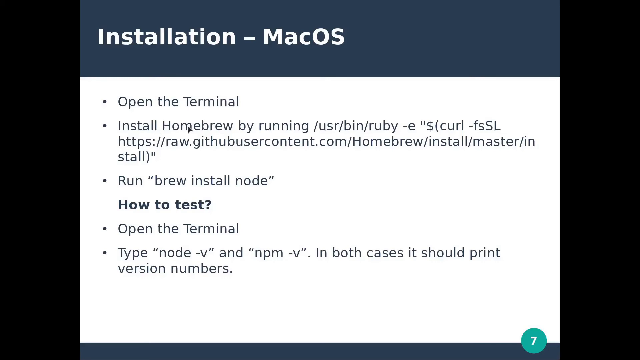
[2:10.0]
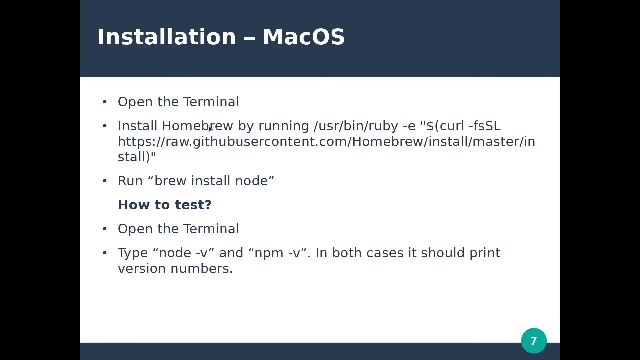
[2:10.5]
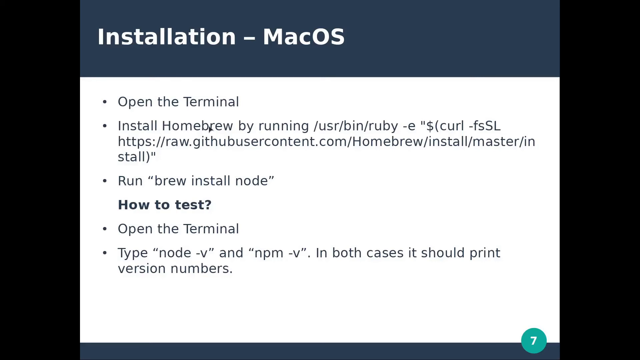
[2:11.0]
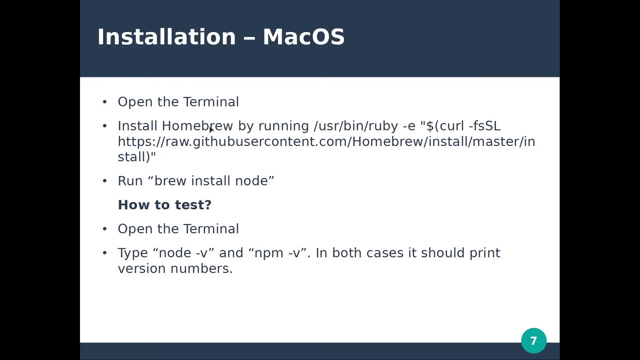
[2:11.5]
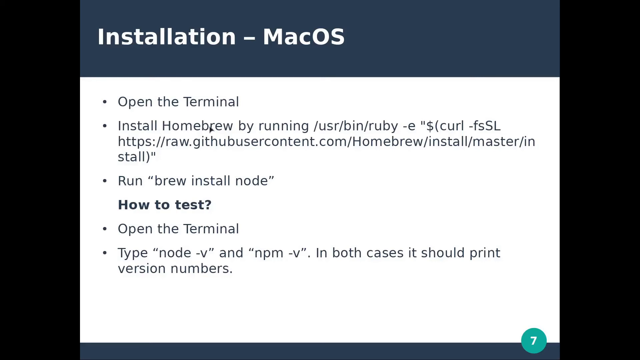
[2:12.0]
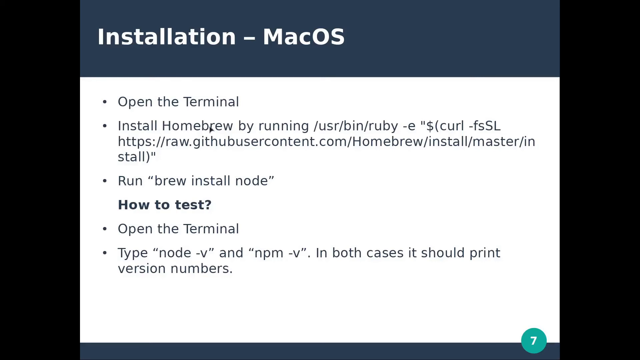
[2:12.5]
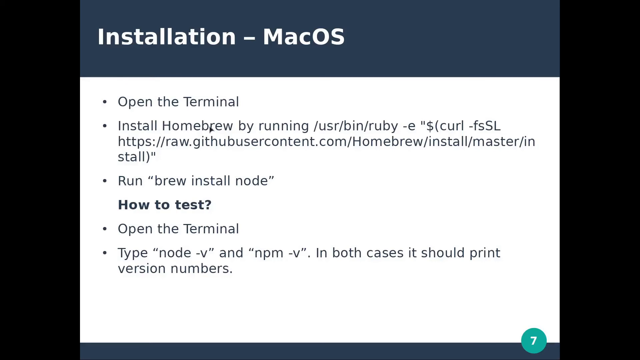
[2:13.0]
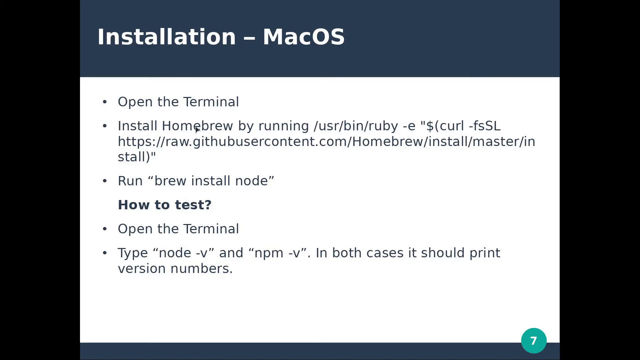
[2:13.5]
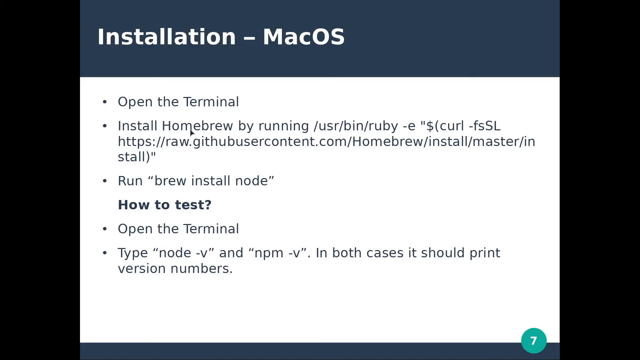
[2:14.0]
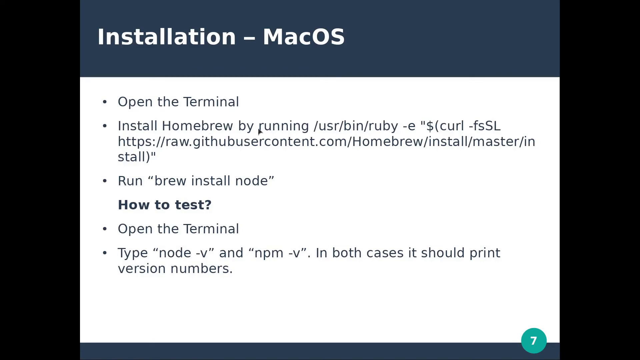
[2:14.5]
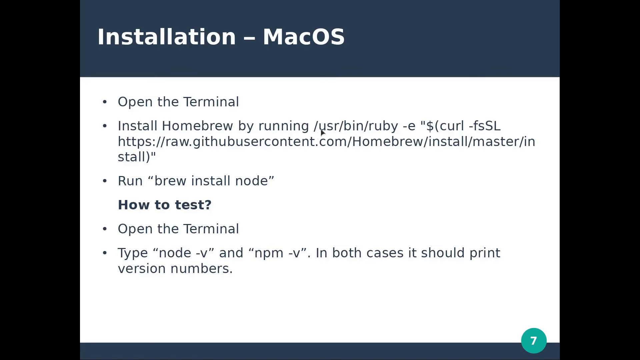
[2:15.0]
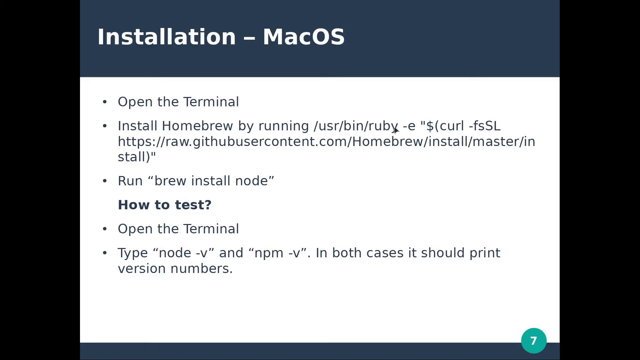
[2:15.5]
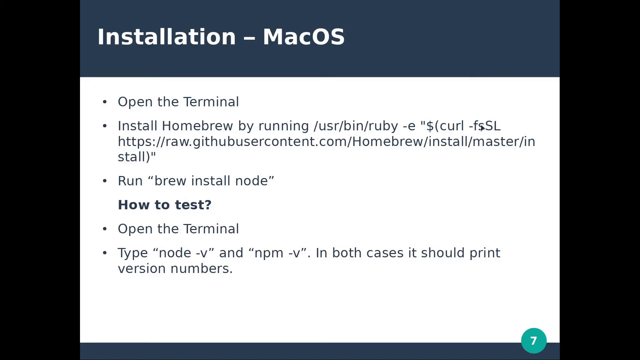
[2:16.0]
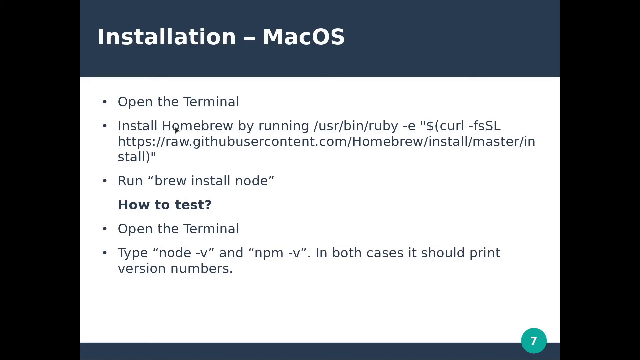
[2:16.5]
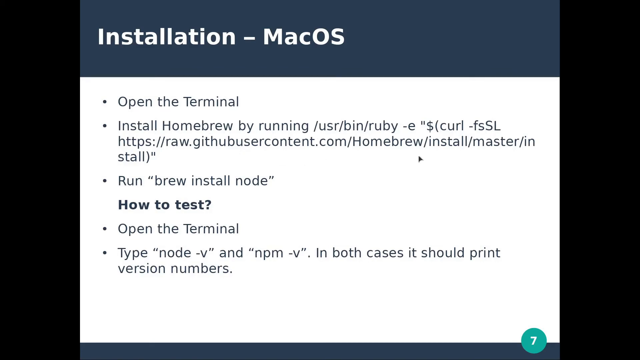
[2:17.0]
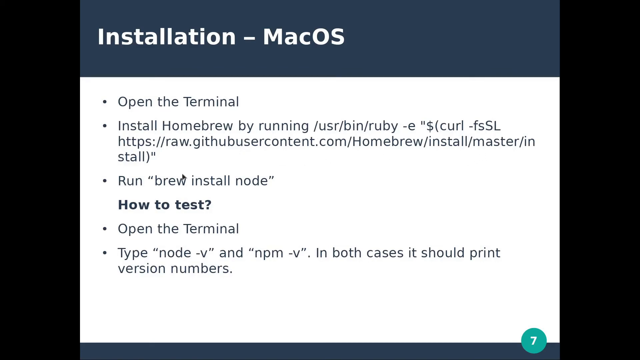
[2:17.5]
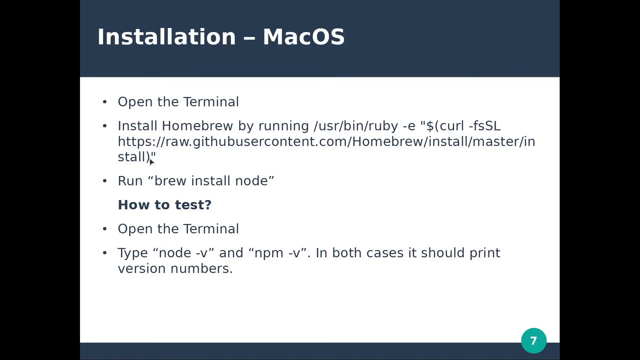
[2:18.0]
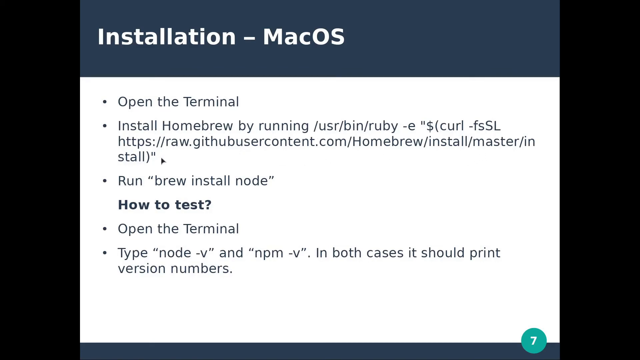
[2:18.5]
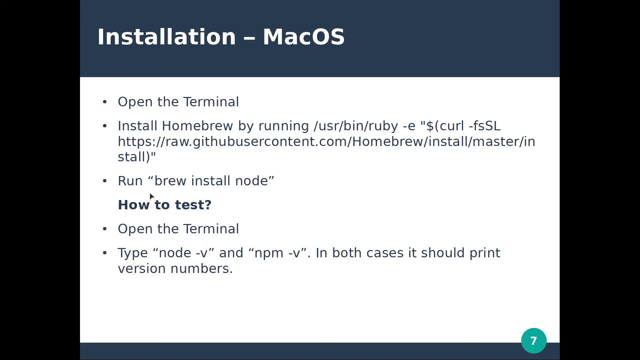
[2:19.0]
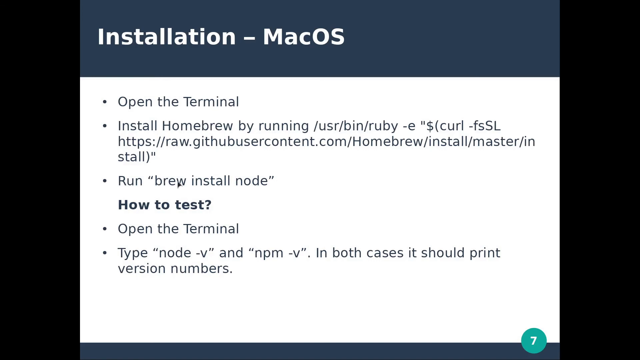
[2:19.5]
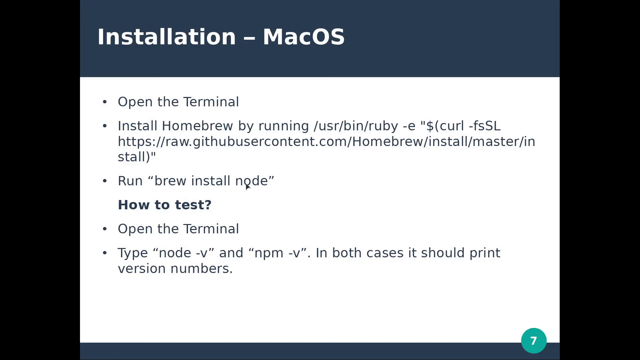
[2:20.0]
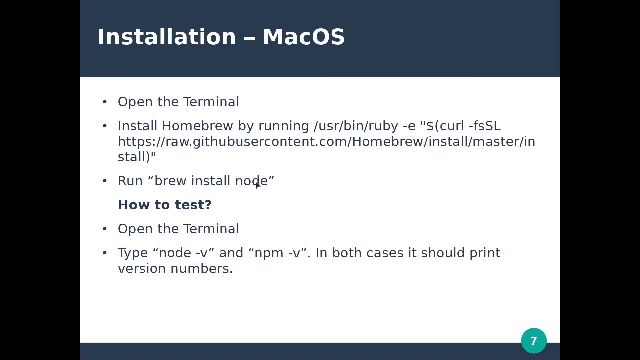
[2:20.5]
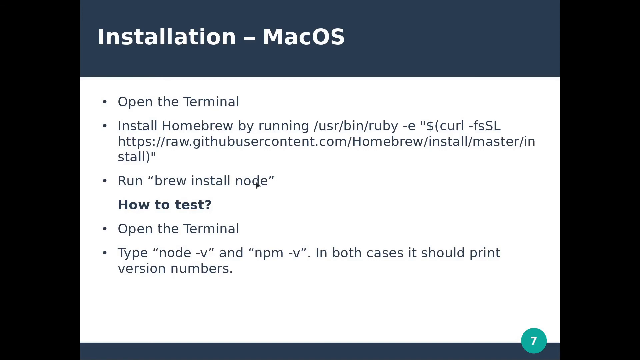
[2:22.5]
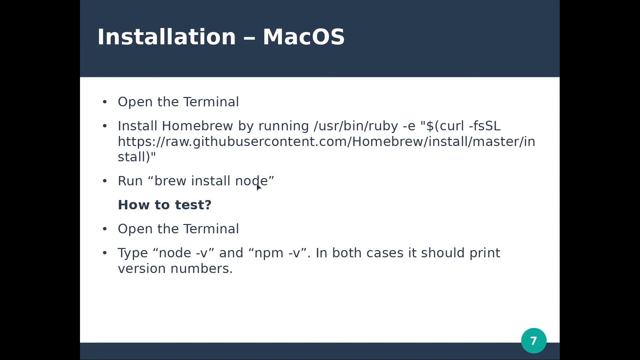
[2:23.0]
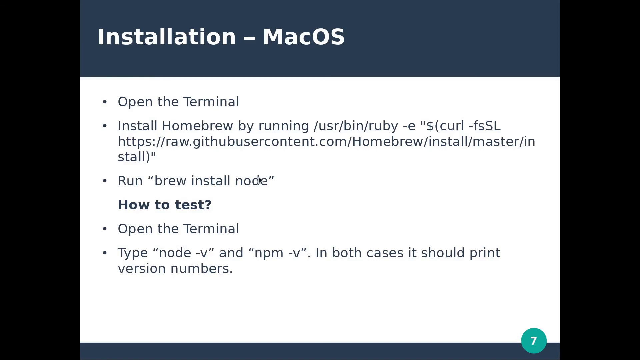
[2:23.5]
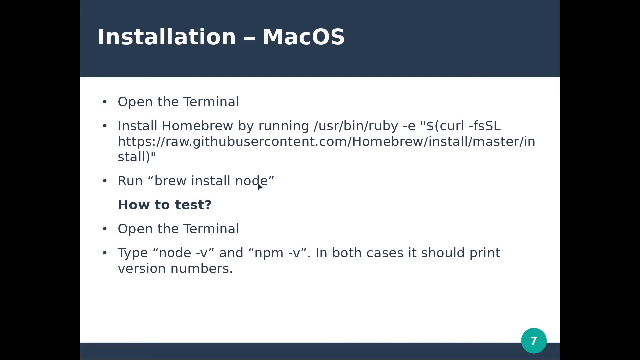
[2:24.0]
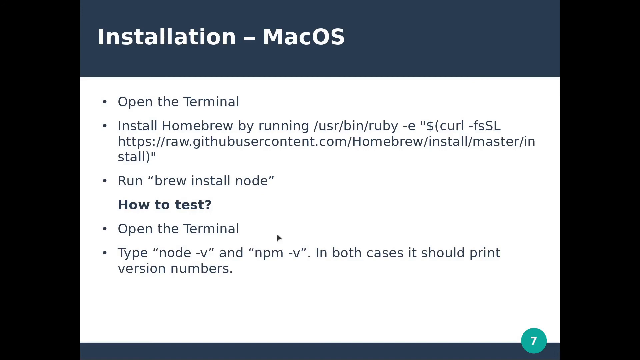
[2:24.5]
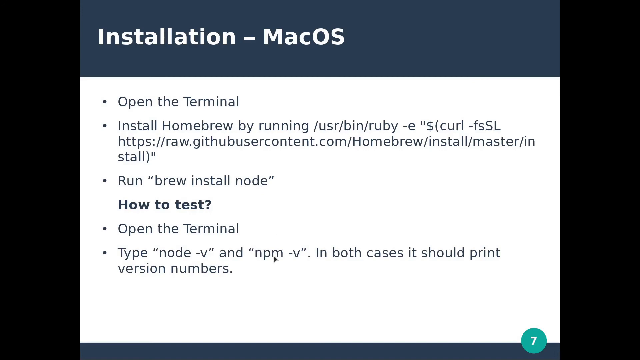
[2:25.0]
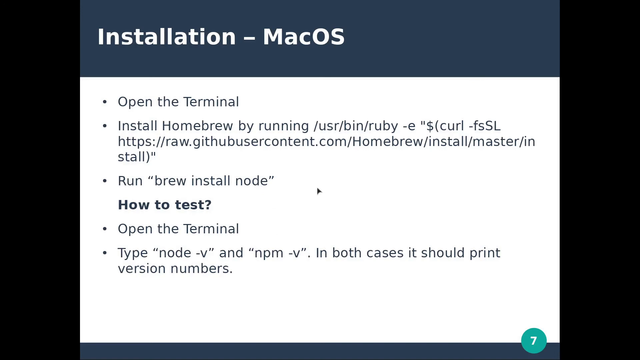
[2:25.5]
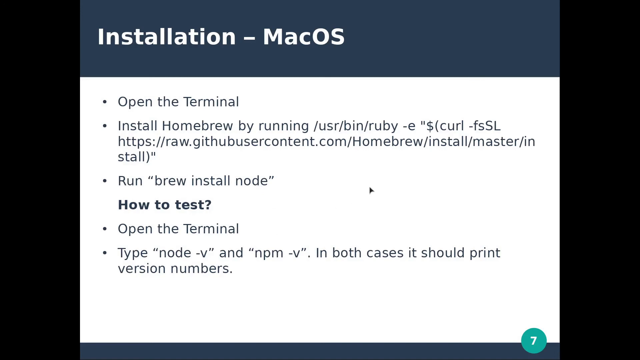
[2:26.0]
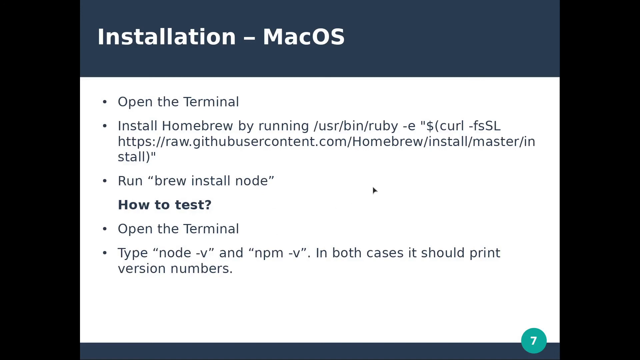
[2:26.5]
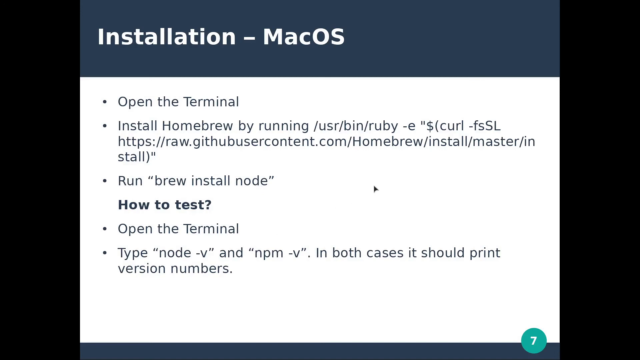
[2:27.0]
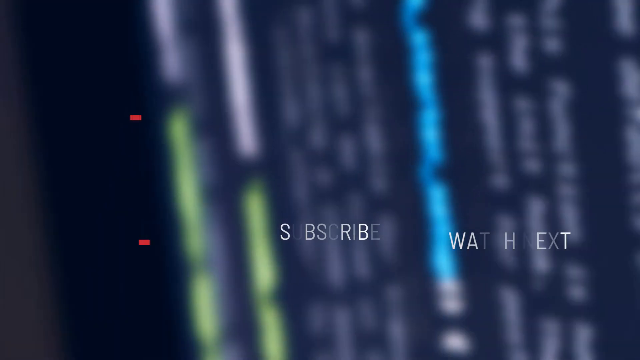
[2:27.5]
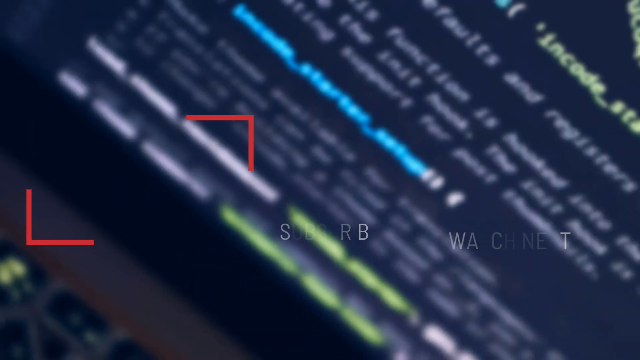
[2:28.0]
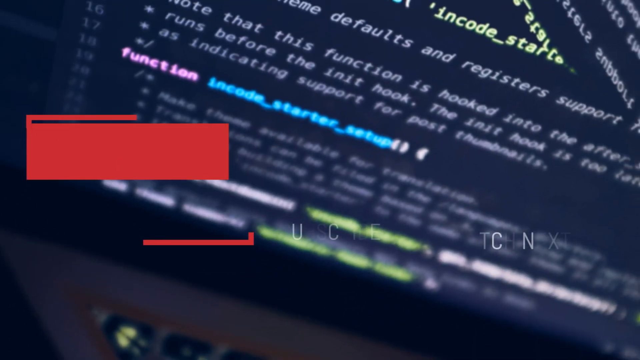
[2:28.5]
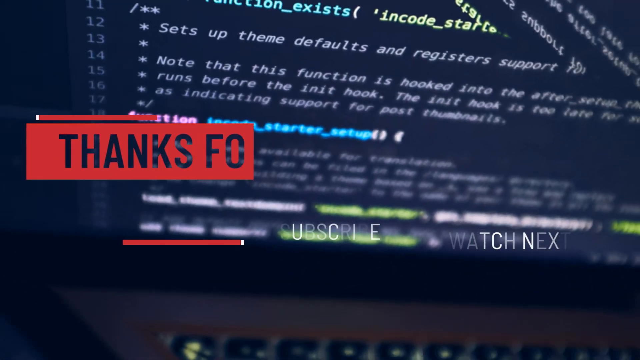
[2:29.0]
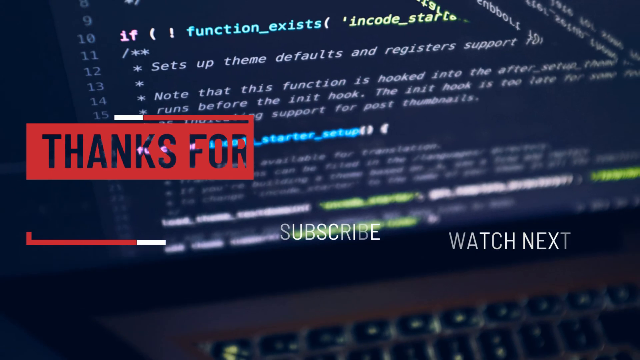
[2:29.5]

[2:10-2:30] A screen headed "installation - Mac OS" has five bullet points beneath it. The first reads "open the terminal". The second reads "Open Homebrew by running /usr/bin/ruby -e "$(curl -FsSL https://raw.githubusercontent.com/homebrew/install/master/install)"". The next reads "run "brew install node"". A heading reads "how to test?", followed by "open the terminal, type "node-v", "npm-v". In both cases, it should print version numbers." A cursor moves across the screen as the instructor uses it to point to different parts of the instructions he wants to highlight; the cursor moves for most of the presentation. Finally the last screen of the presentation appears.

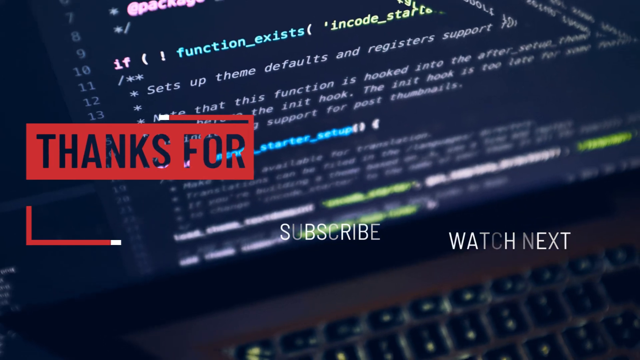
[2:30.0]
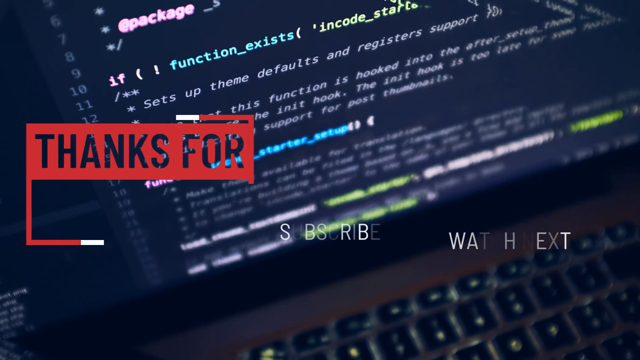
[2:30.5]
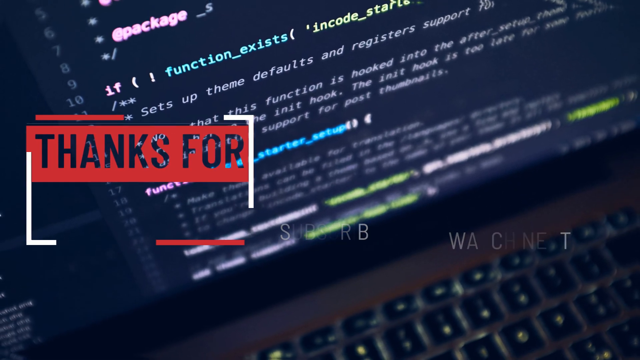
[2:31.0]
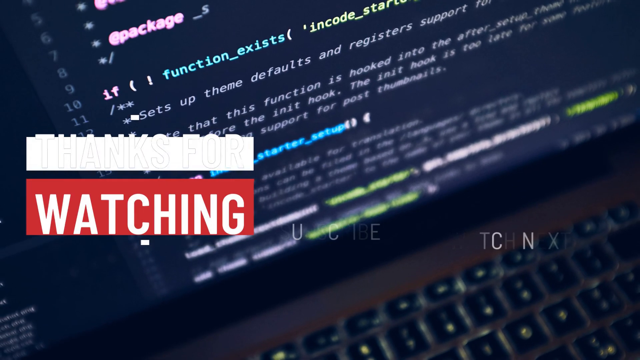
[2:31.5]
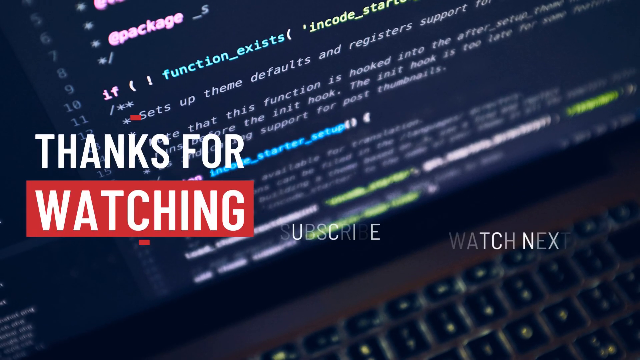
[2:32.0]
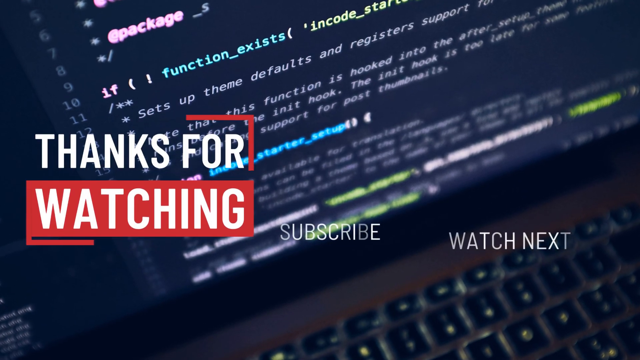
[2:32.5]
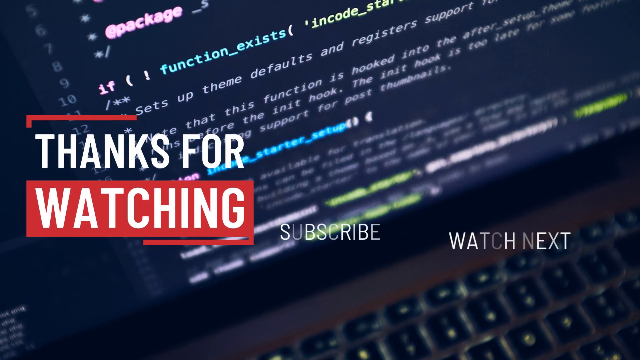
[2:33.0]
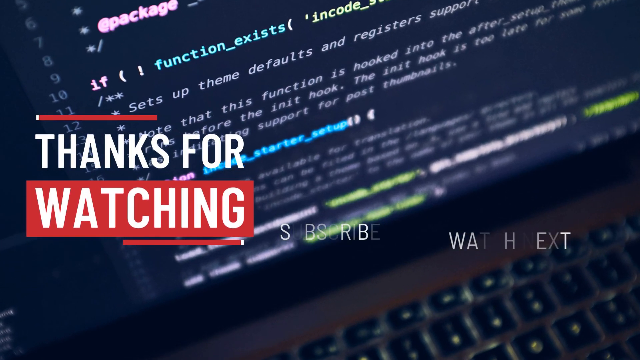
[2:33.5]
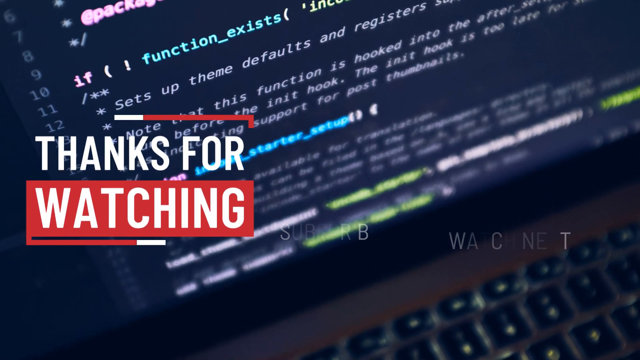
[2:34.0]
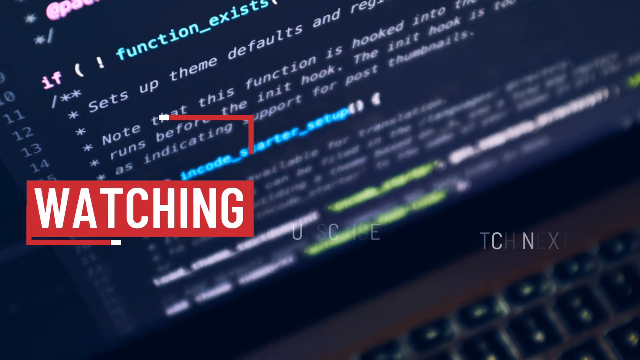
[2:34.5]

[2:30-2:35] The final screen of the presentation shows, in the background, a computer screen with programming code in white letters against a black or blue background. In the foreground a red square reads "thanks for" in black letters, and beneath it "SUBSCRIBE" and "WATCH NEXT" appear in white capital letters. A new red box then appears beneath the "thanks for" text, reading "watching". The camera closes in on the background, and red lines rotate across the screen.